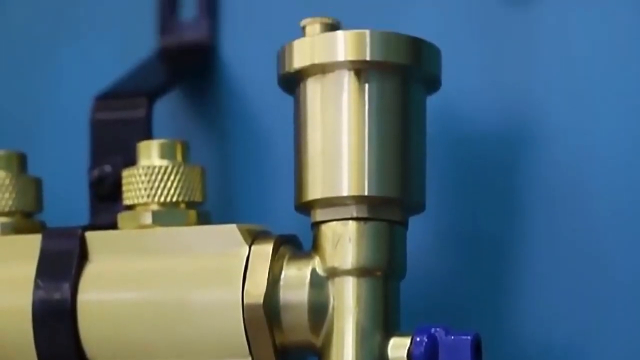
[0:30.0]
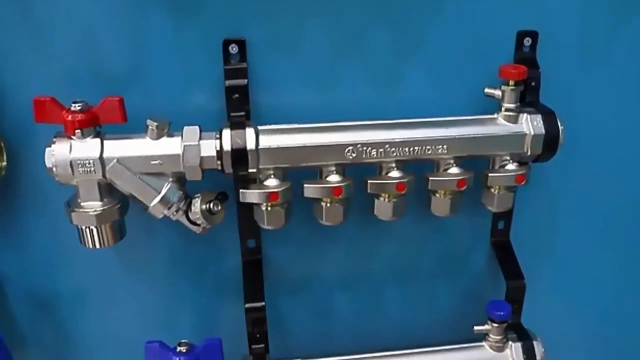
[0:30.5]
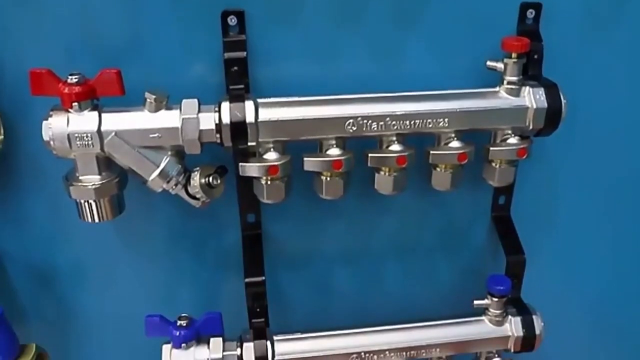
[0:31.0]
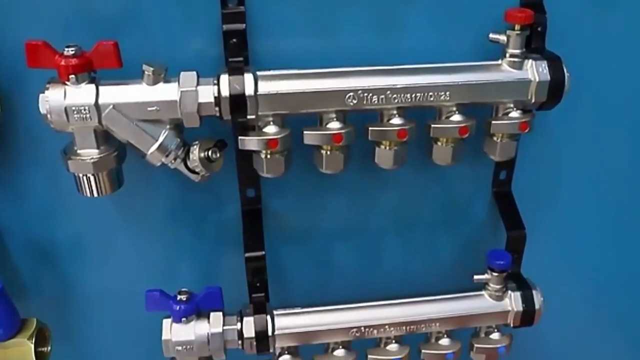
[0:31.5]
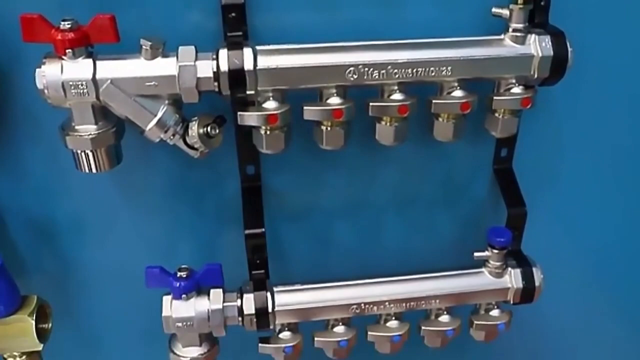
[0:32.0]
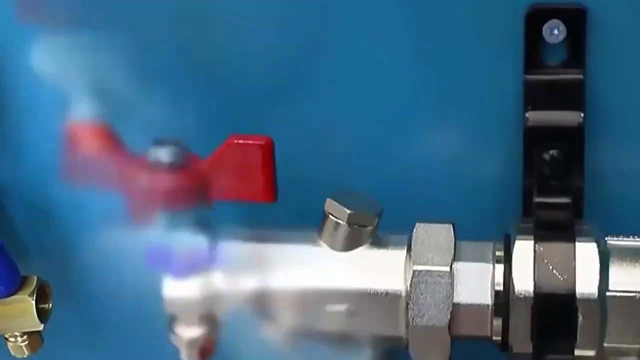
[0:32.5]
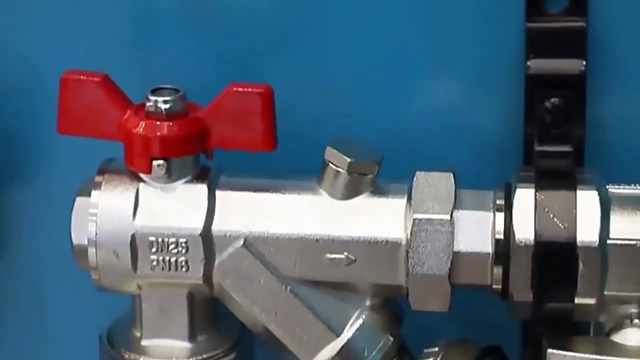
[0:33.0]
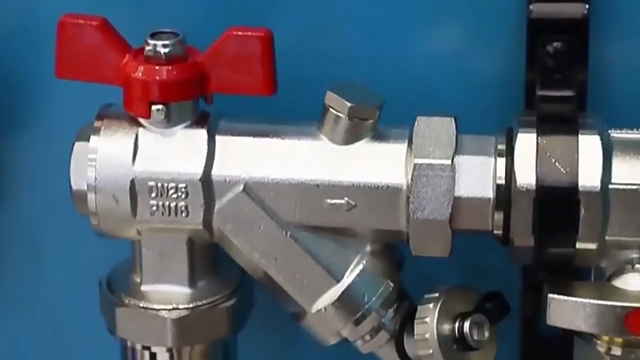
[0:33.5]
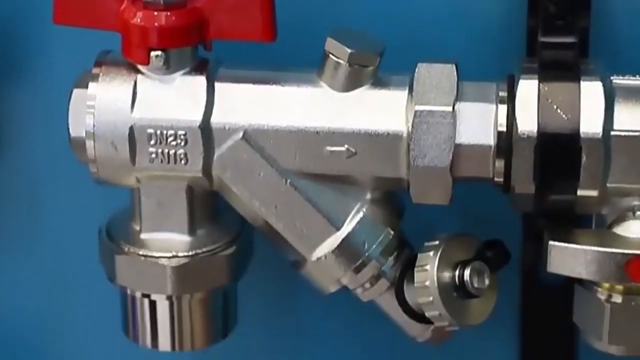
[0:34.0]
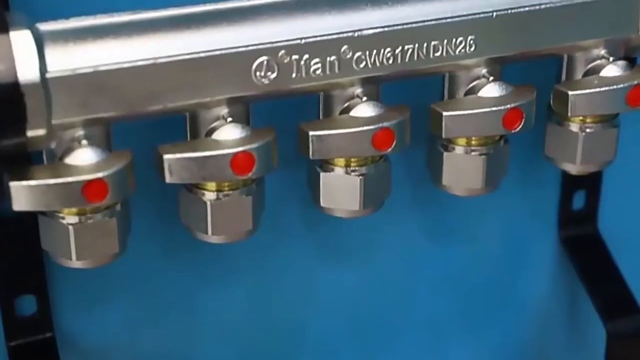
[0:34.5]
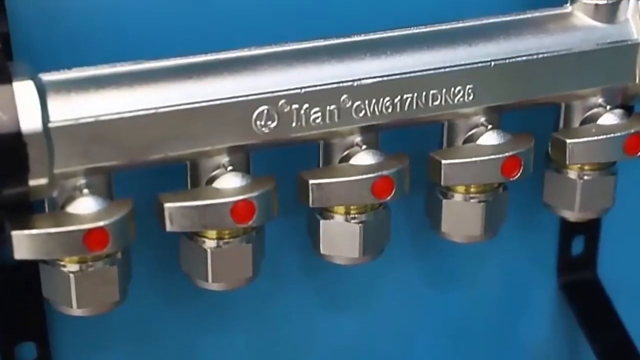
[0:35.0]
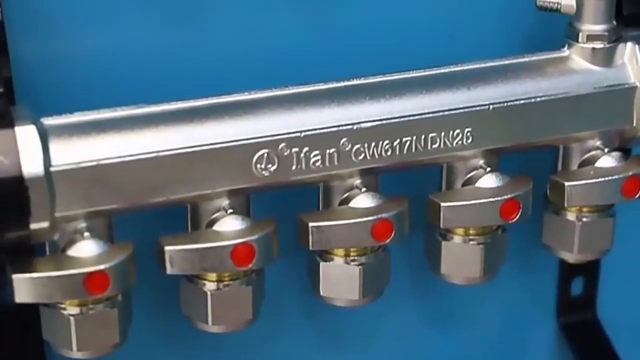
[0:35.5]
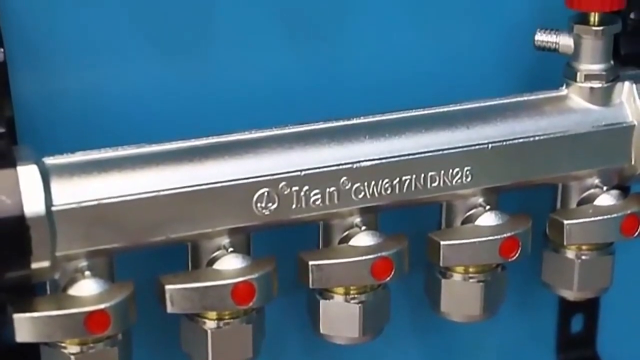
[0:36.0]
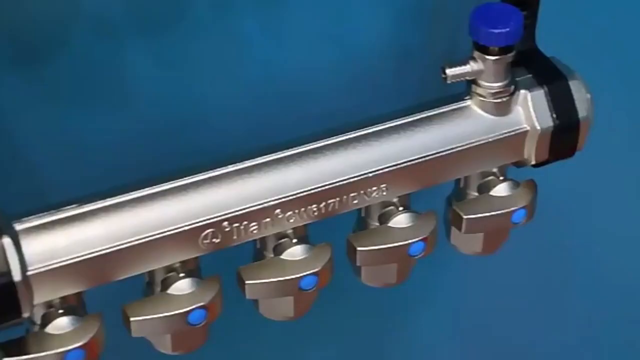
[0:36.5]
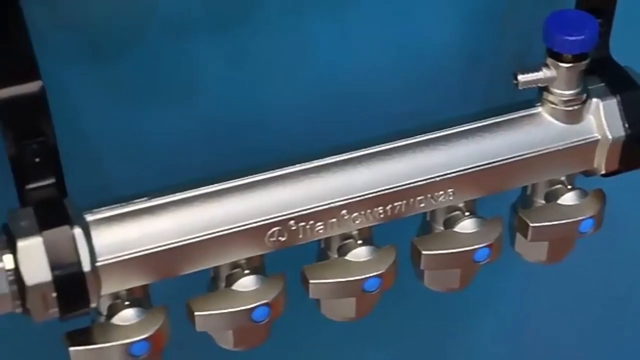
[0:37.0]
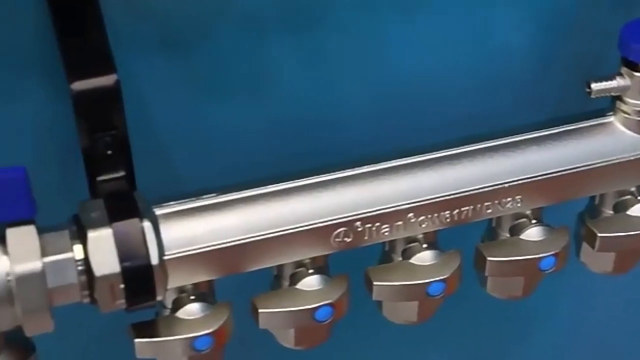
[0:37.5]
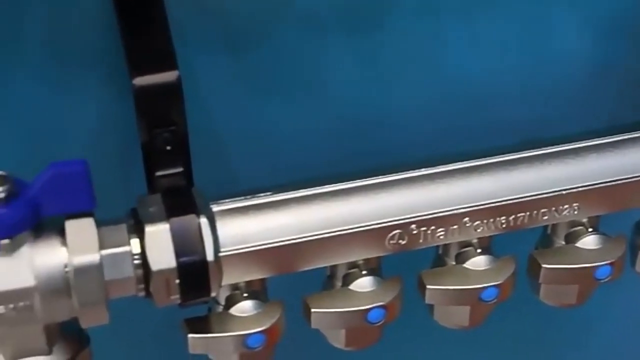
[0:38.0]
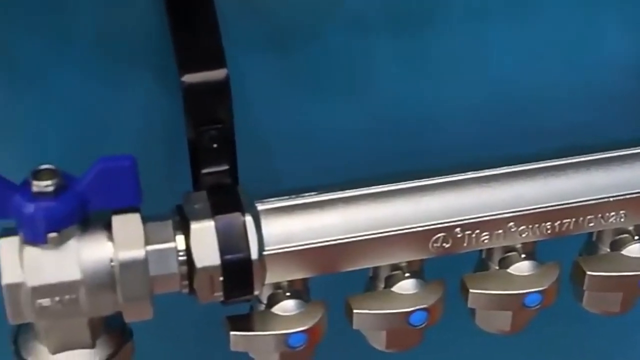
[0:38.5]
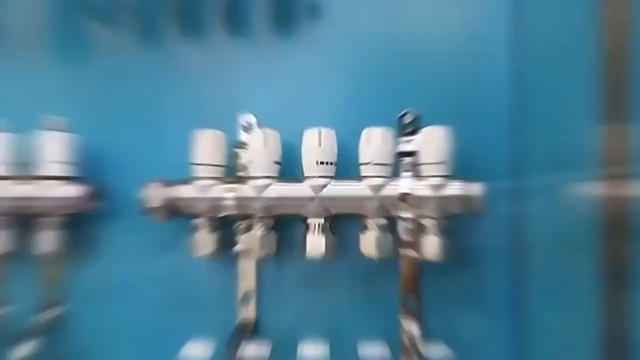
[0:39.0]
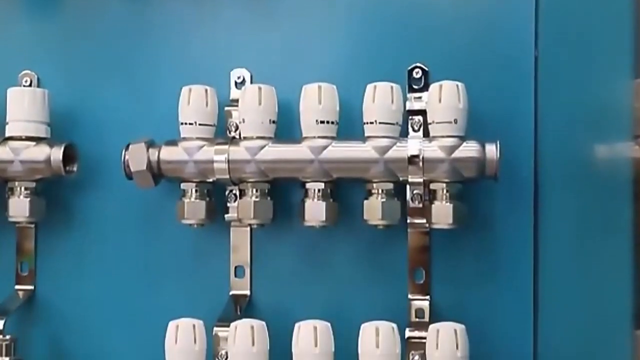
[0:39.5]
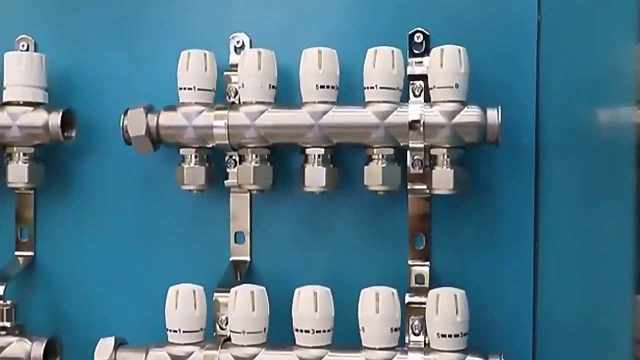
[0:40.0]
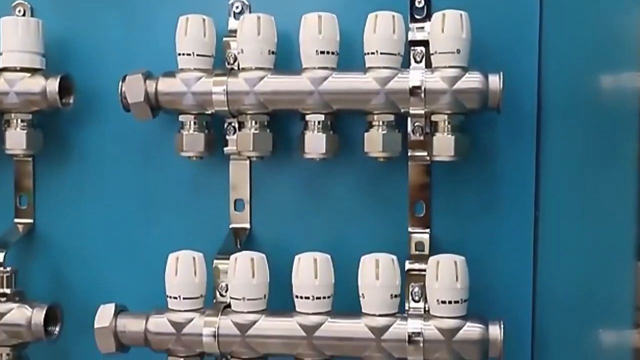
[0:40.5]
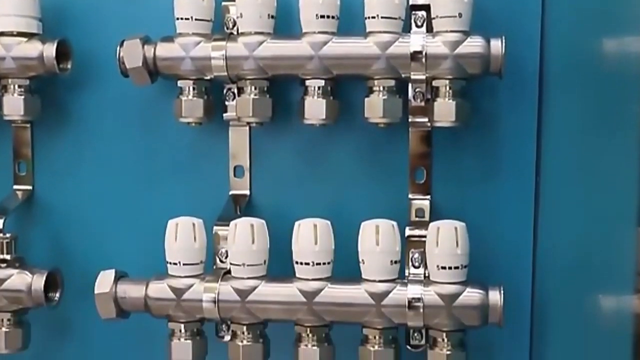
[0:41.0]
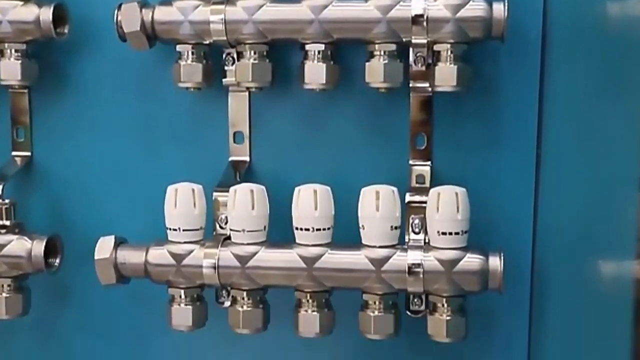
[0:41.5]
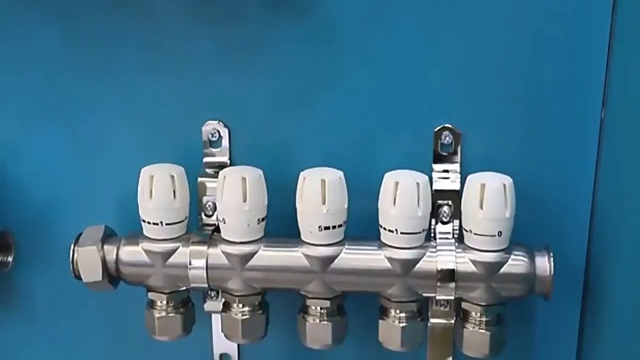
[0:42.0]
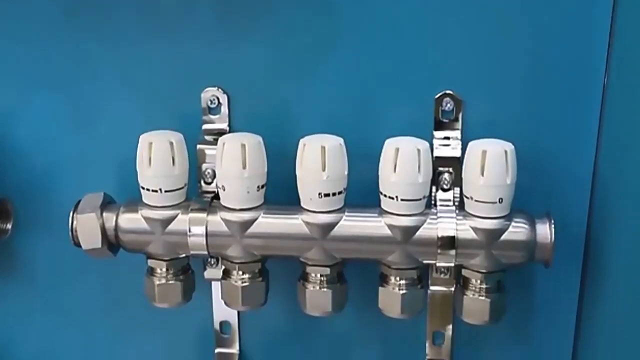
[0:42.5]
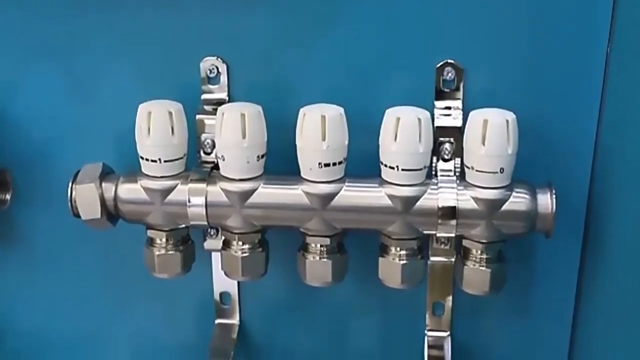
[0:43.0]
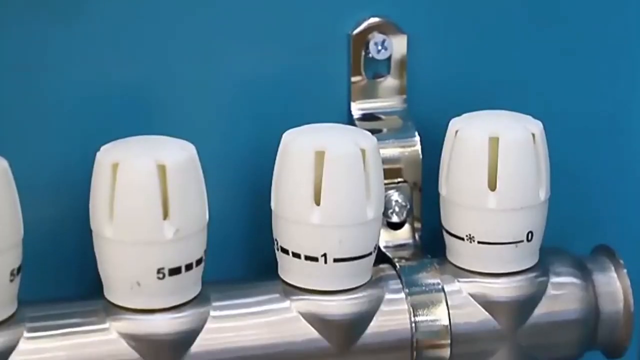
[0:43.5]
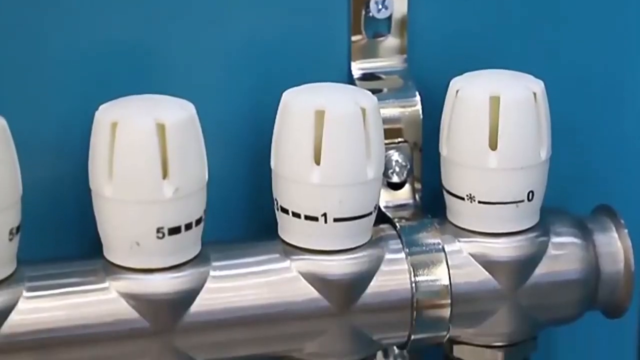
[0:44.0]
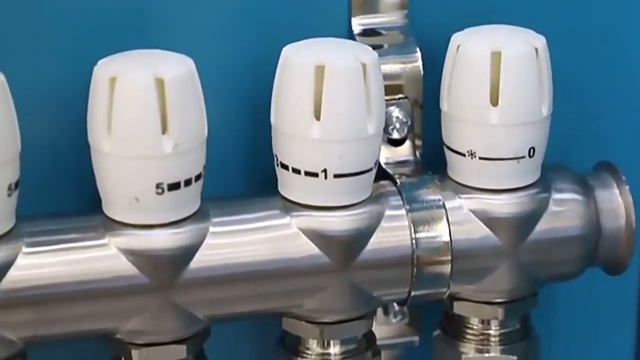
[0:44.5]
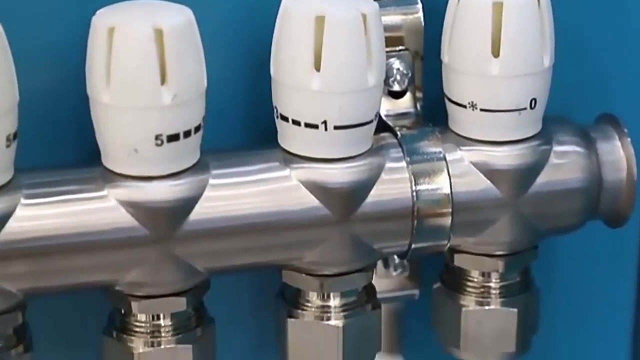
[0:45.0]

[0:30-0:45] Brass manifold objects are shown, attached very securely to the wall by strong silver metal clips with bolts going through them. The wall is painted a solid deep dark blue. Some of the manifolds are a shiny bronze shade, and they all look completely brand new. Some of the manifolds have white dials with numbers on them, including a 1 and a 5; the dials look like they might be hard plastic. One manifold has a red knob to turn it on and off, and another has a blue knob that can be turned to the left or the right.